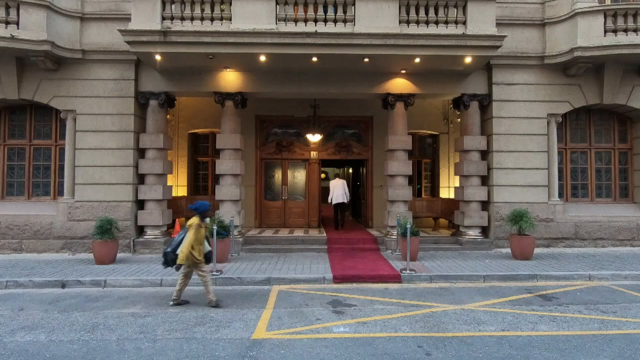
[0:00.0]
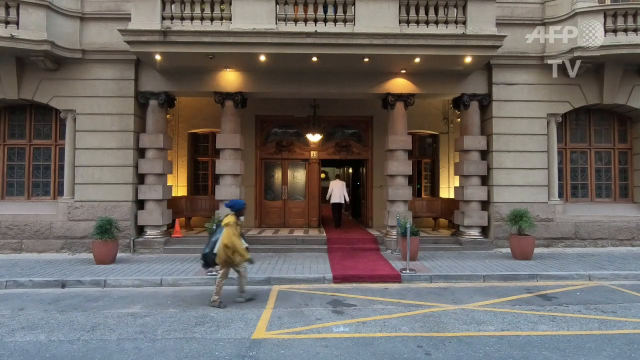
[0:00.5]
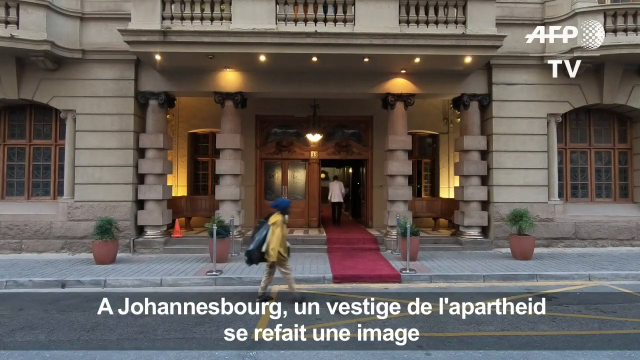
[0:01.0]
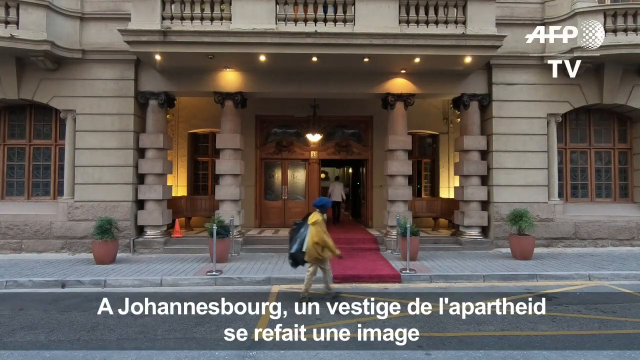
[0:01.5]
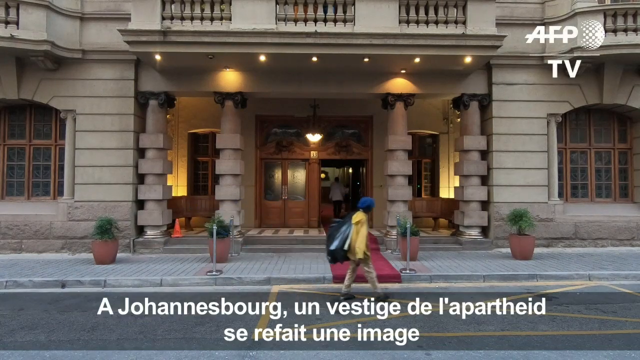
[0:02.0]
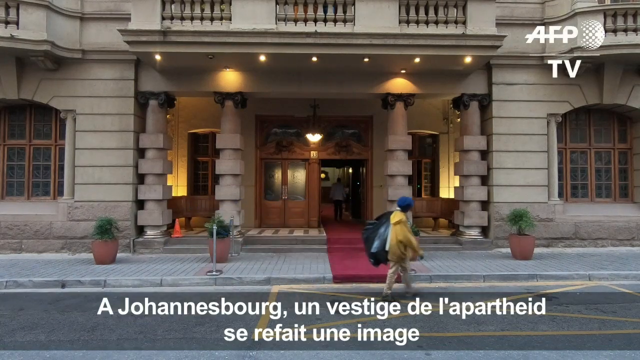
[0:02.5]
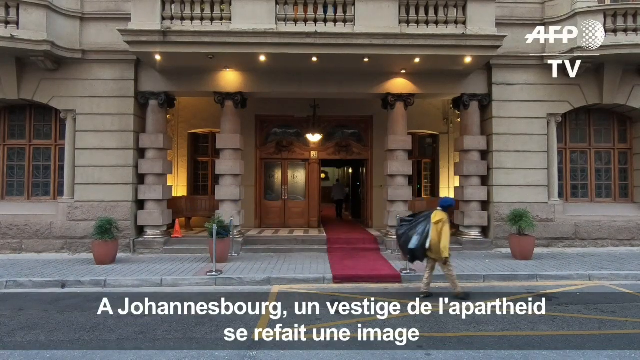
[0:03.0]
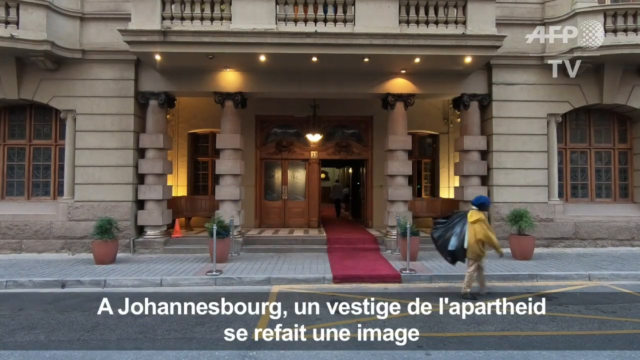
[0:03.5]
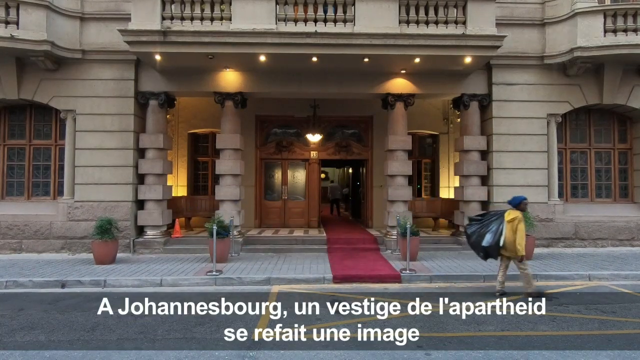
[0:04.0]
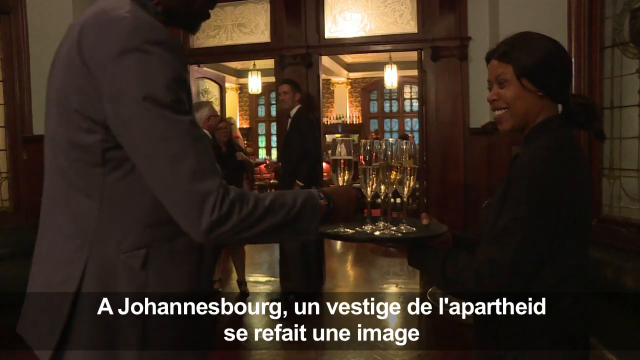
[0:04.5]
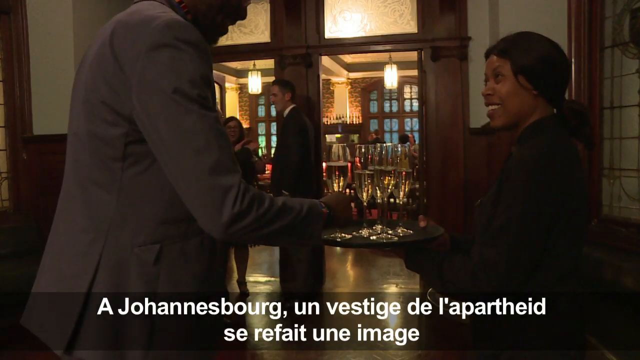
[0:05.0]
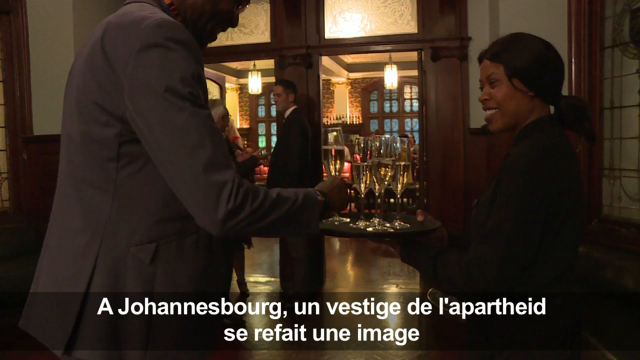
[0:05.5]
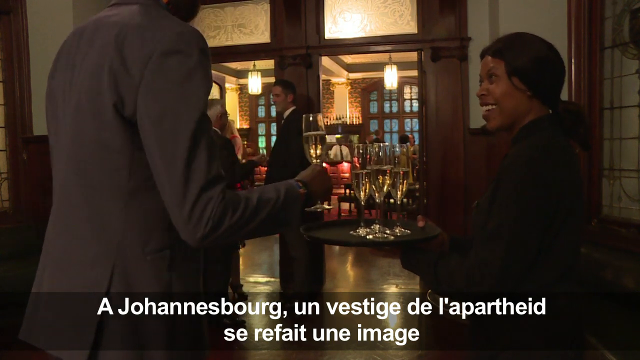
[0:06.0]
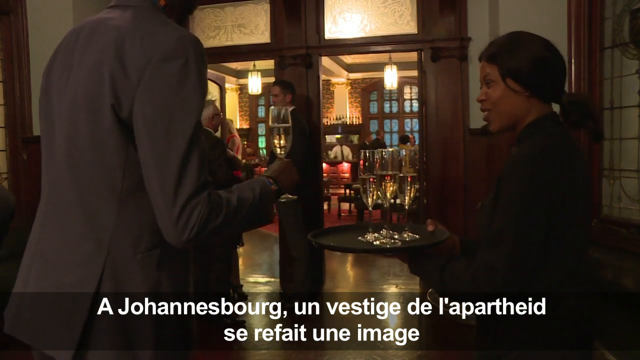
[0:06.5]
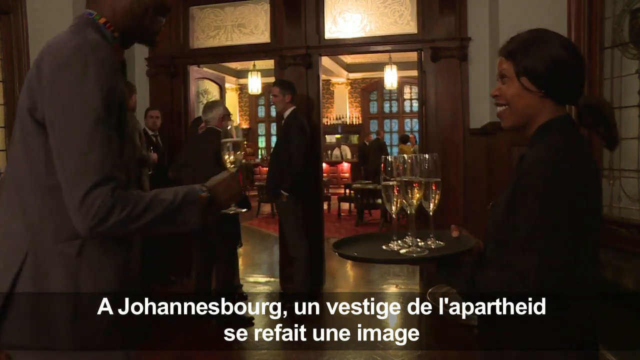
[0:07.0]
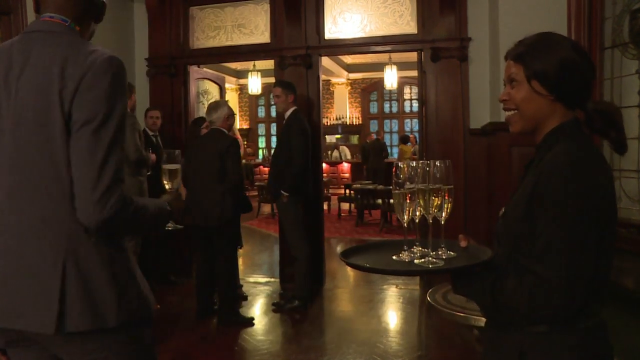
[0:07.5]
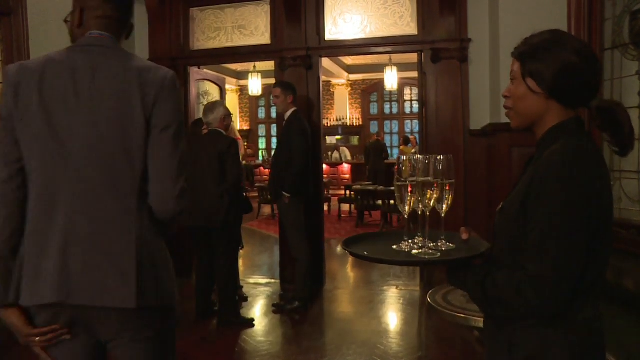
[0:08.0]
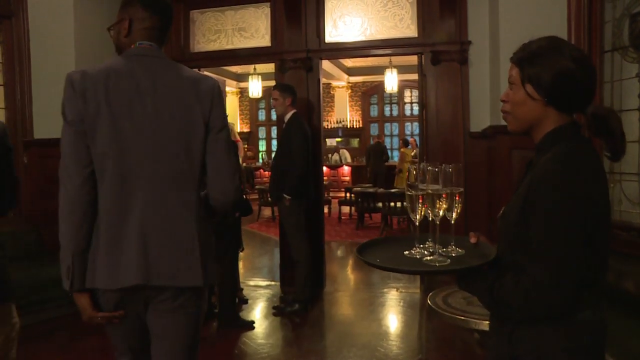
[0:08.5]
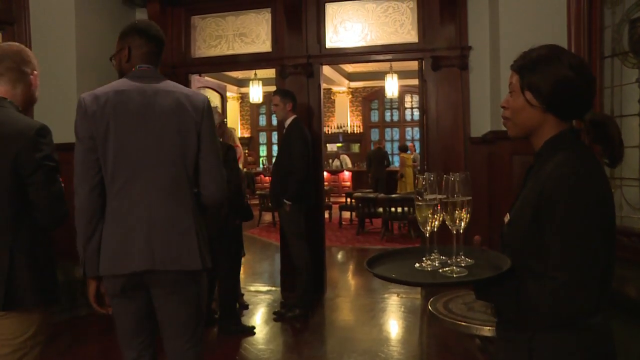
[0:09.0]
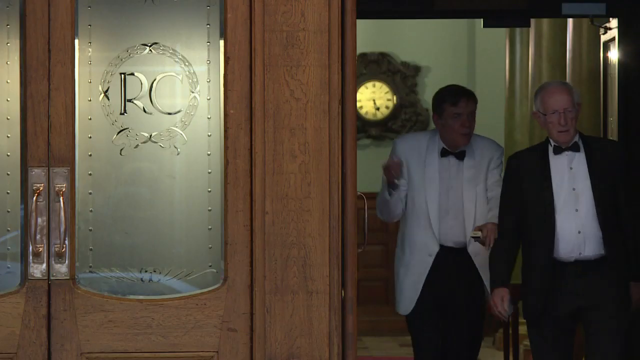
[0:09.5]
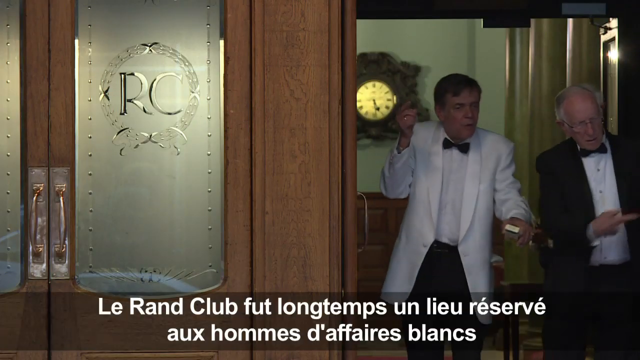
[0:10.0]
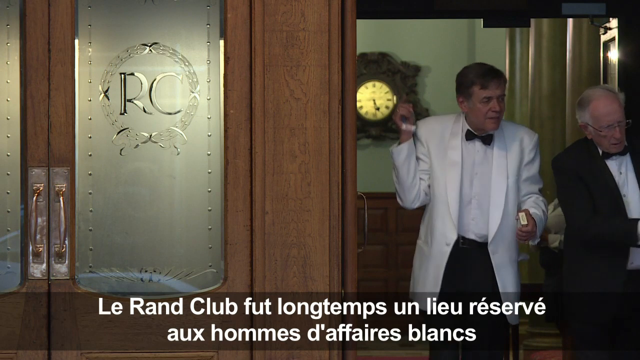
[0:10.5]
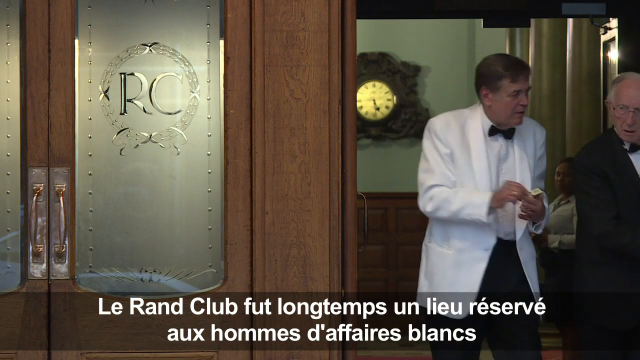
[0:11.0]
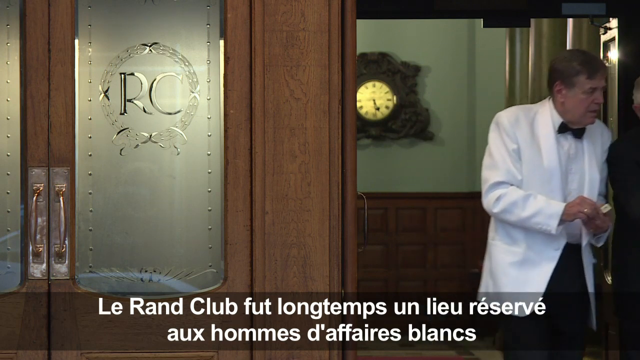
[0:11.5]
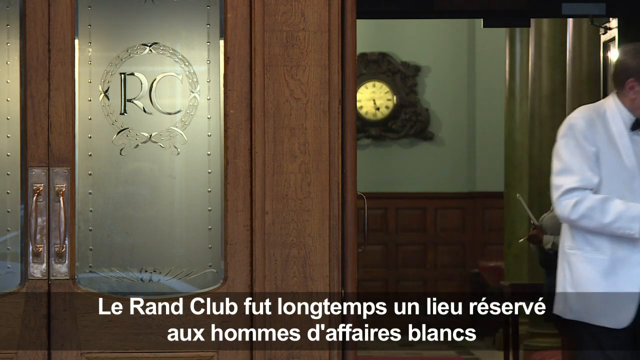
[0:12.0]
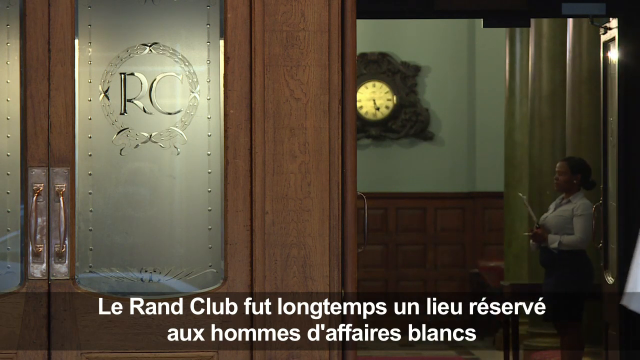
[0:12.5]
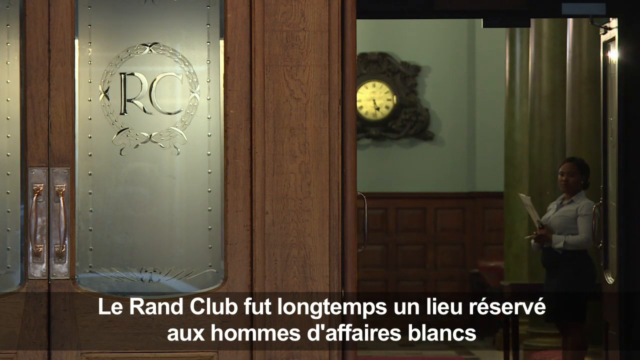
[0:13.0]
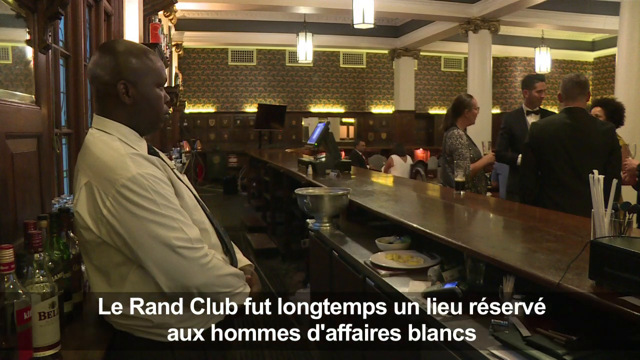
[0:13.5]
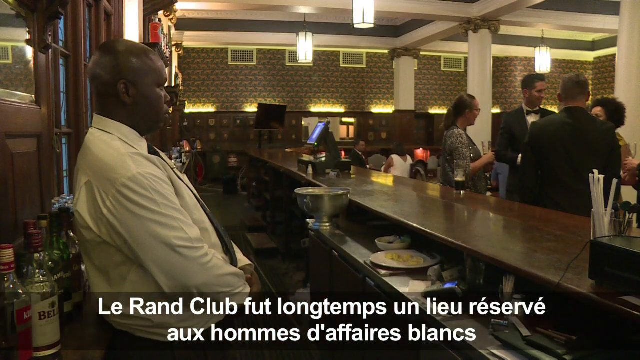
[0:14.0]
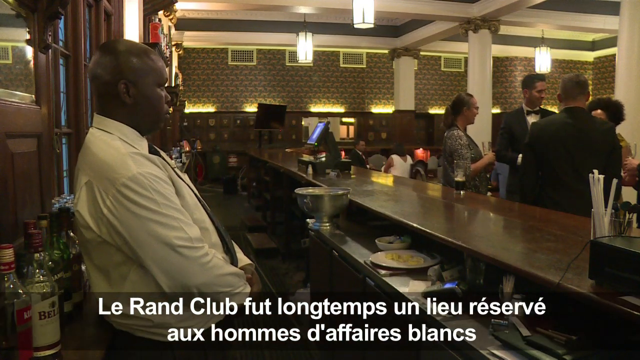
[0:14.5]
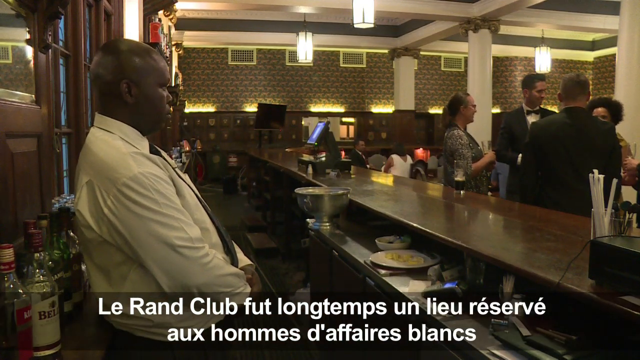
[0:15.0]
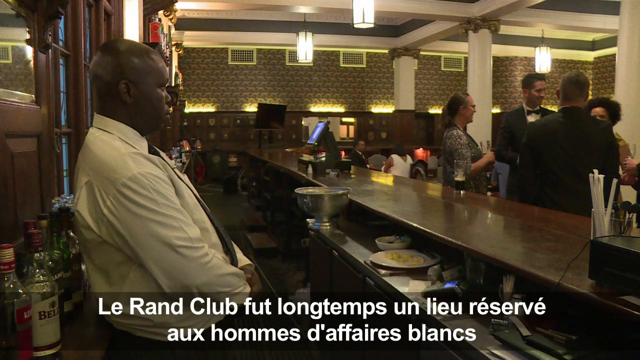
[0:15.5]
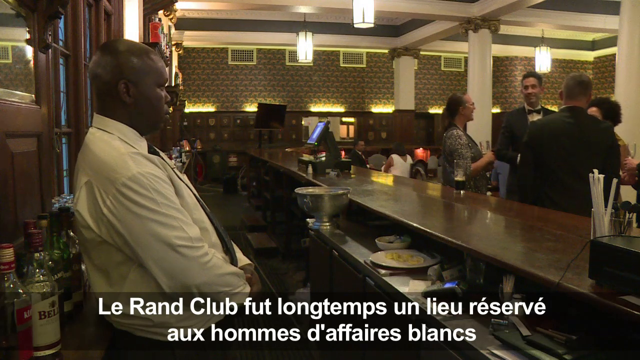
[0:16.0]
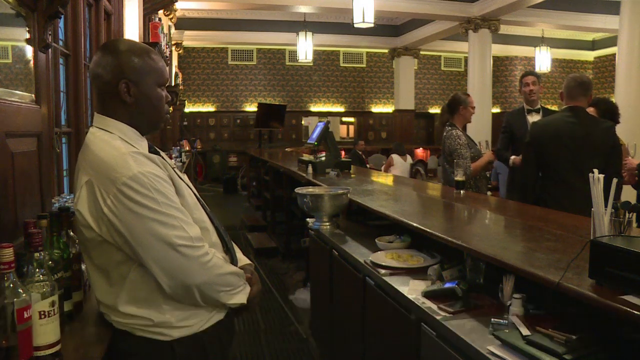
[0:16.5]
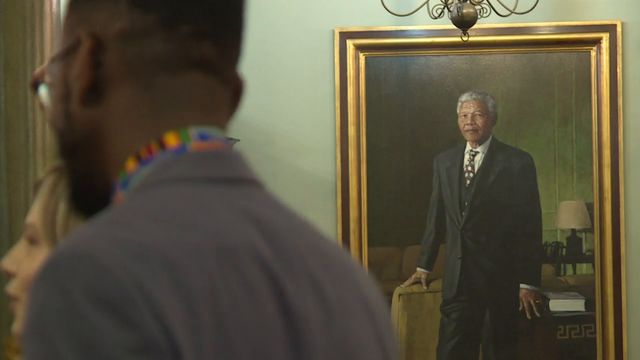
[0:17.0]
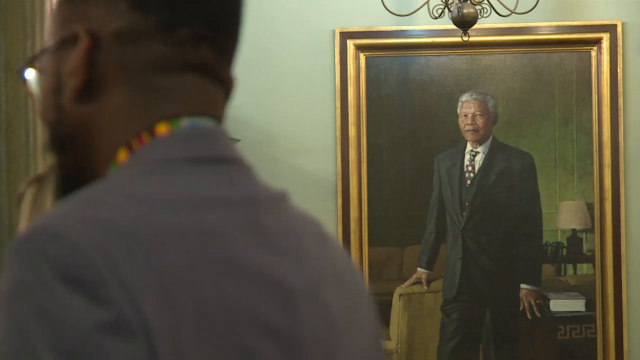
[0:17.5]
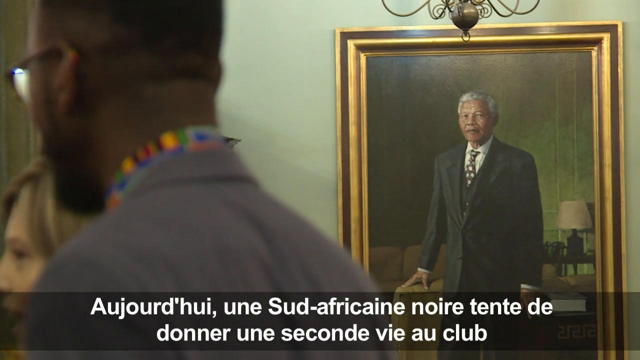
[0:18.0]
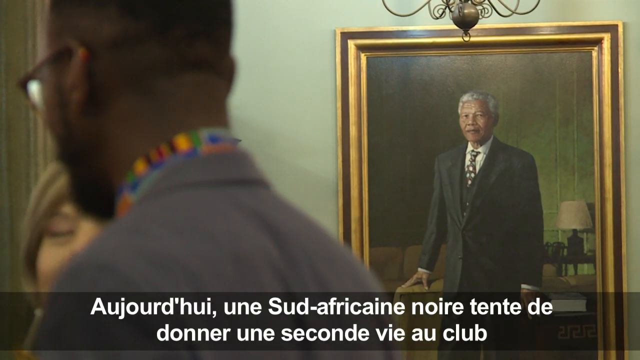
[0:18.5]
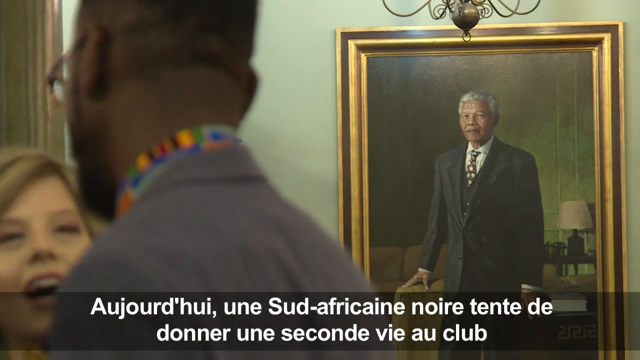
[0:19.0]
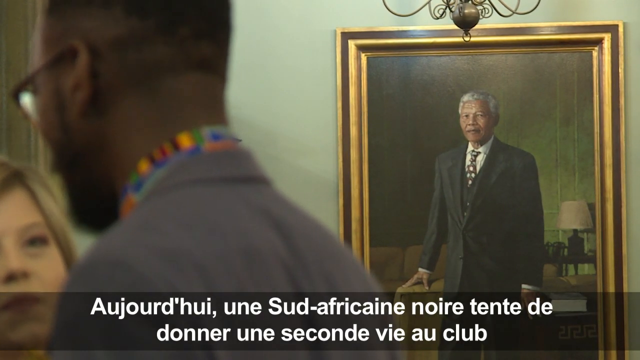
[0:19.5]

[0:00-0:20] A building with pillars has four plants and planters outside of it. There is a window on the left-hand side and on the right-hand side of the building, and there are two wooden doors next to each other. A person wearing black pants and a white long-sleeved jacket walks into the door. There are some overhead lights above the doors, and a red carpet leads to the street from one of the doors. A person walks by on the street in front of the building, wearing a yellow jacket and a blue hat and carrying a large bag. At the top, the screen says "AFP TV". There are some subtitles, including the words "Johannesburg" and "der Apartheid", possibly a subtitle or an announcement. The scene moves inside what is apparently the same building. A black woman with black hair holds a tray with what appear to be five clear champagne flutes. A man in a black suit with a white shirt stands in front of an open doorway, speaking to or guiding an elderly gentleman, also in a black suit with a white shirt, into that room. A man in a kind of beige suit reaches for one of the champagne flutes and lifts it off the tray a bit. The outer portion of this room is dark, and through the doors the inner room is brighter, with two overhanging lights. The man takes his champagne flute, walks away to the left and joins another man as they walk toward the door. Then there are two doors side by side. One set of doors is closed; it is frosted, has silver or gold handles, and has the initials "R C" etched into the glass with something like a wreath around them. Through the open door, a woman in a white shirt is visible, and there is a large wooden clock on the wall with a kind of yellow or lit-up face. Two men in suits, possibly tuxedos, walk out of the door on the right. One is an elderly bald man with white hair, wearing a white undershirt under a black tuxedo and black pants. The man to his right, who is not as old and has dark hair, wears a white tuxedo with a black tie; he moves his right hand toward his left hand, puts them together, and they walk off the screen to the right. Next is another room, apparently in the same hotel: a bar. Four people, two women and two men, stand outside the bar and look like they are talking. Behind the dark wooden bar sits a black man in a white dress shirt, the bartender or possibly a waiter, with liquor bottles behind him. There are some dirty dishes on a shelf below the bar, with a silver bucket to his left next to them. A clear jar or glass holding straws in paper is on the bar. The room has three lights showing and some white pillars. The scene moves to another room with a painting, not a photograph, of what looks like Nelson Mandela on the wall. In the foreground a black man with glasses, a beard and a balding head appears to be talking to somebody; he wears a gray jacket with a colorful necklace or something around his neck. Only the back of his head is visible, above the Nelson Mandela painting. A light fixture is hanging.